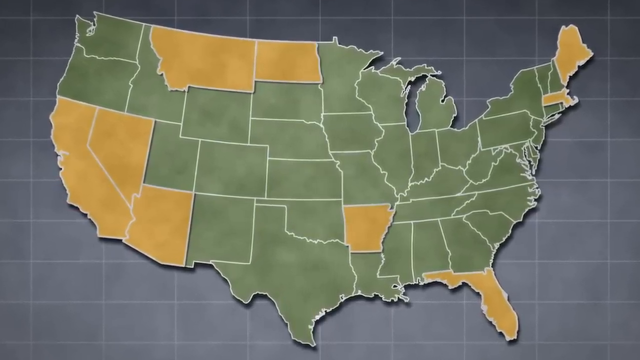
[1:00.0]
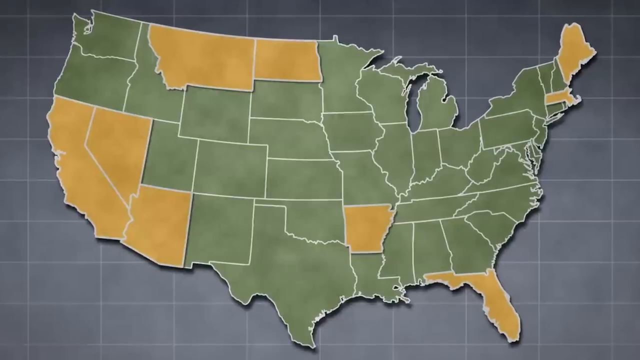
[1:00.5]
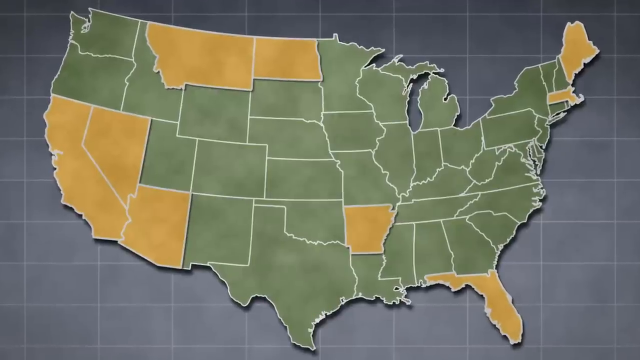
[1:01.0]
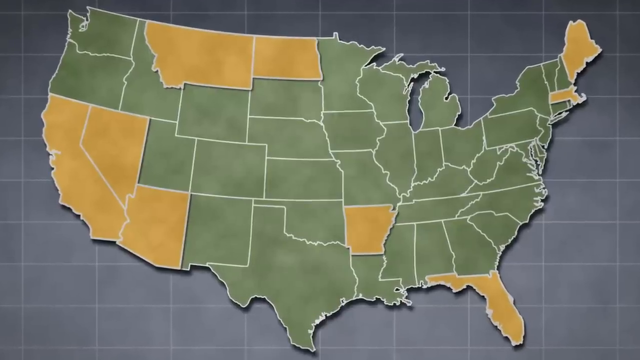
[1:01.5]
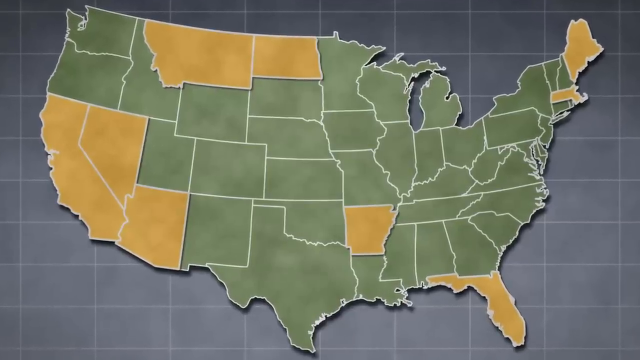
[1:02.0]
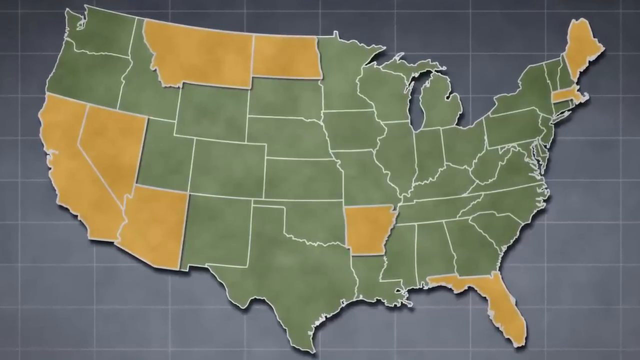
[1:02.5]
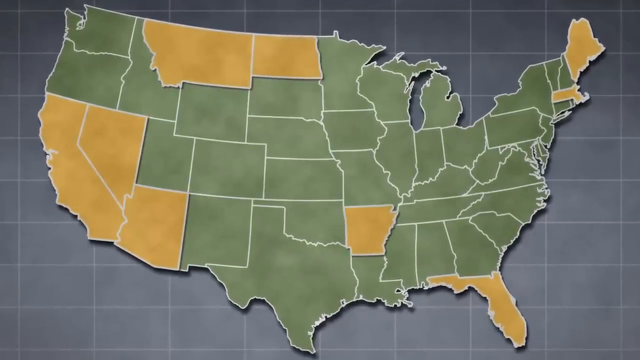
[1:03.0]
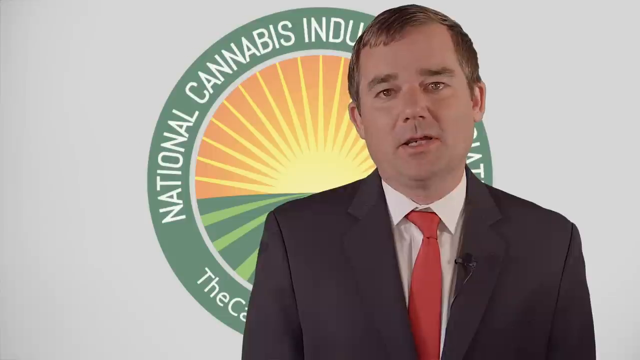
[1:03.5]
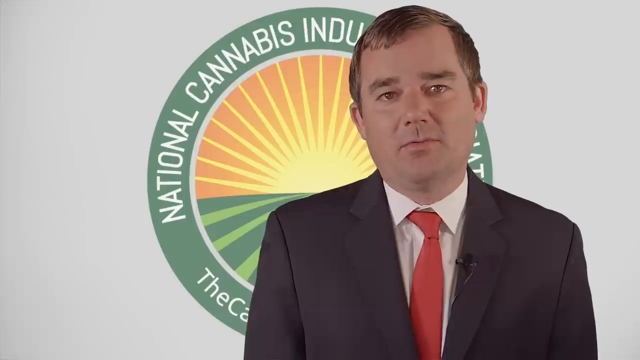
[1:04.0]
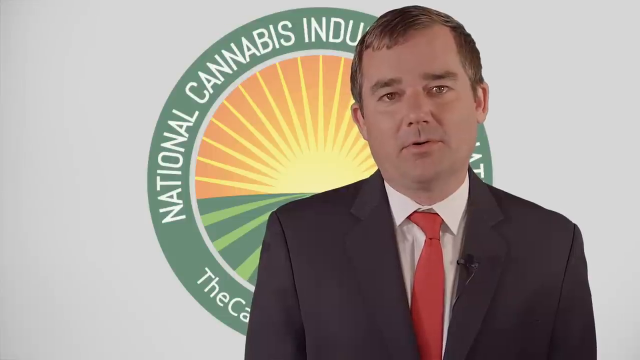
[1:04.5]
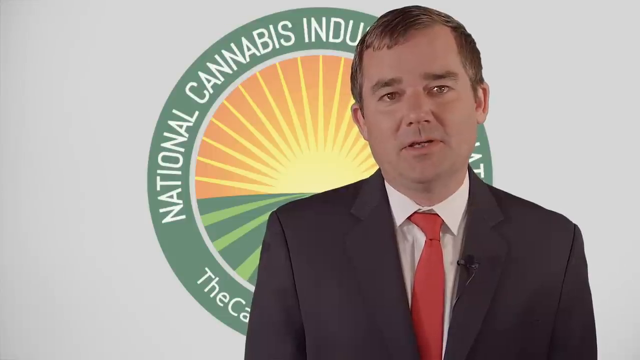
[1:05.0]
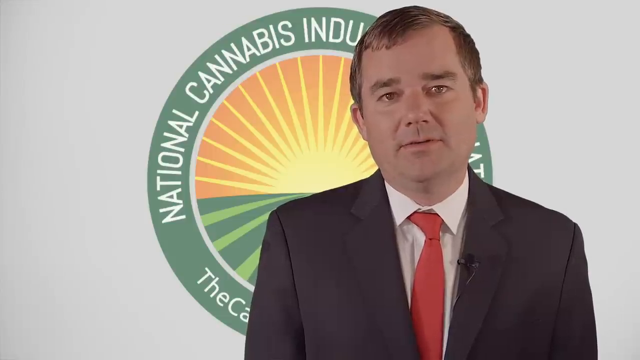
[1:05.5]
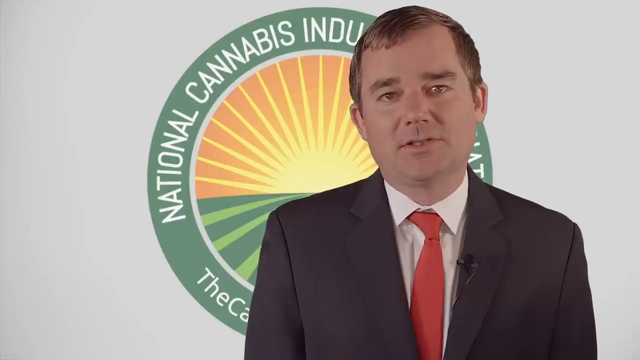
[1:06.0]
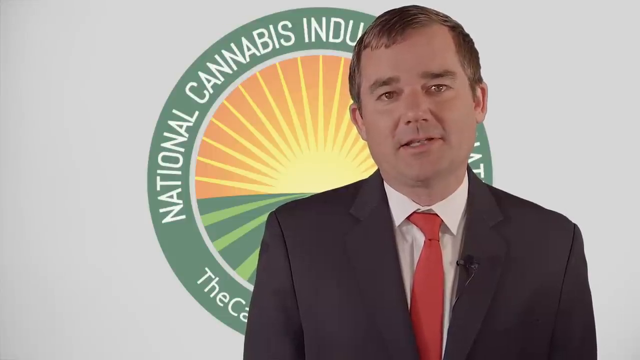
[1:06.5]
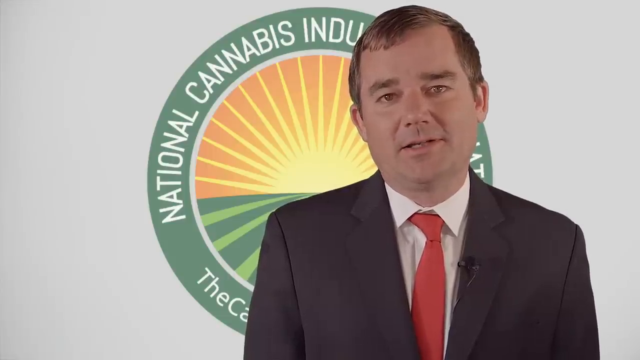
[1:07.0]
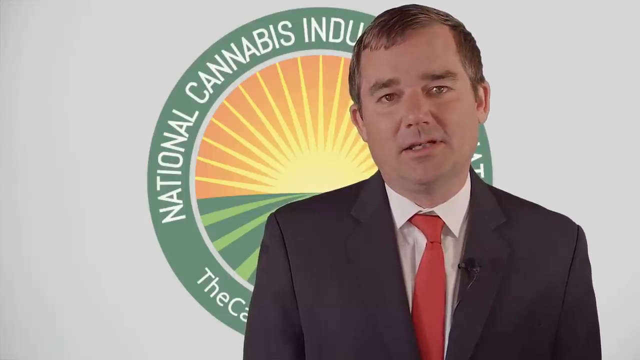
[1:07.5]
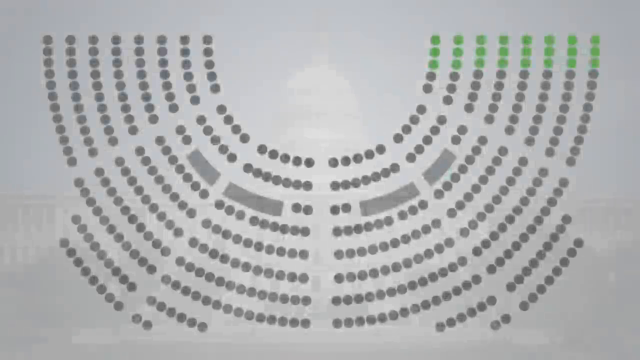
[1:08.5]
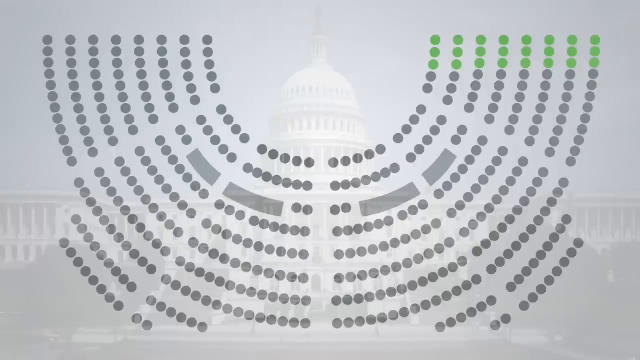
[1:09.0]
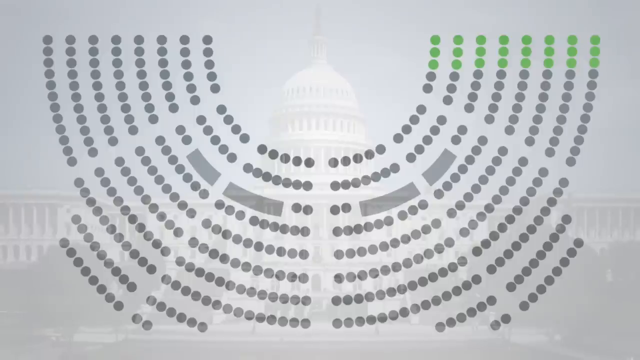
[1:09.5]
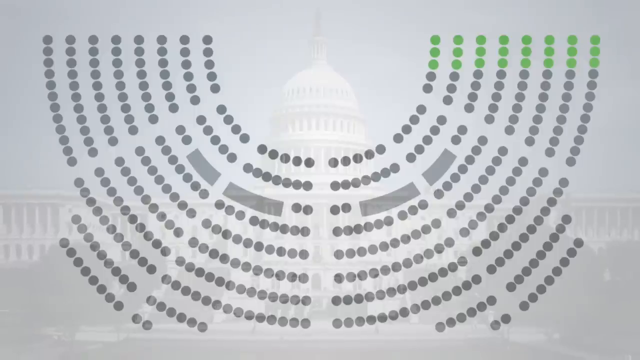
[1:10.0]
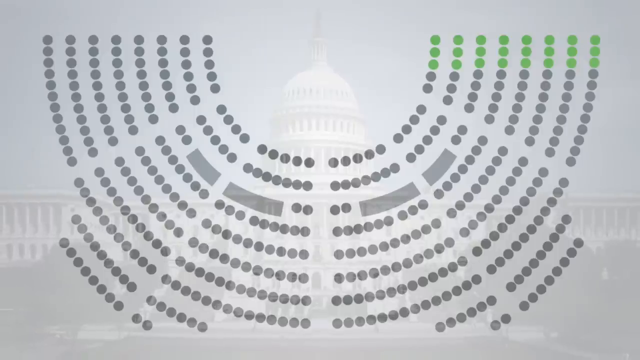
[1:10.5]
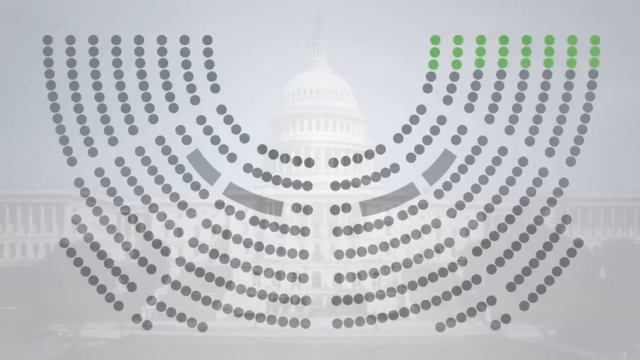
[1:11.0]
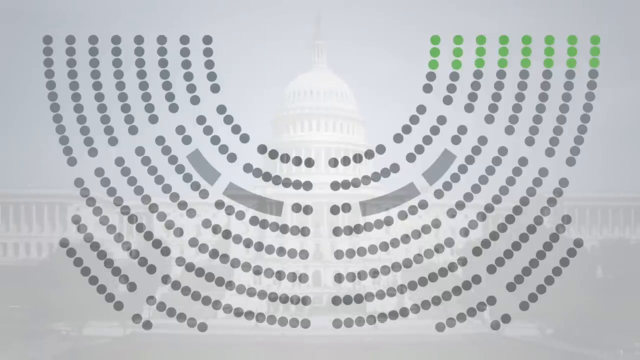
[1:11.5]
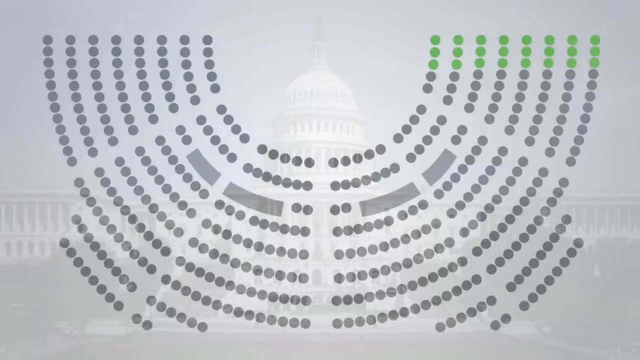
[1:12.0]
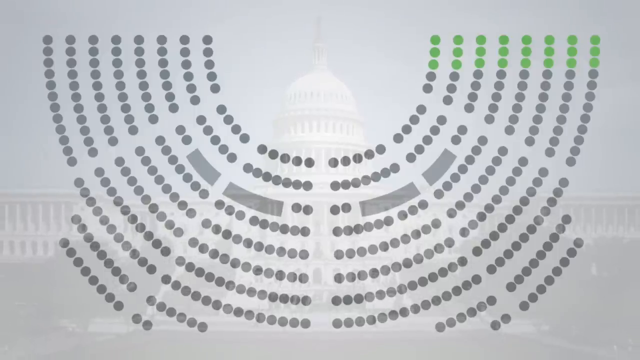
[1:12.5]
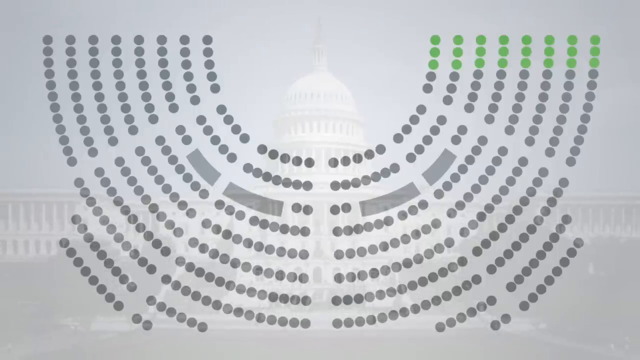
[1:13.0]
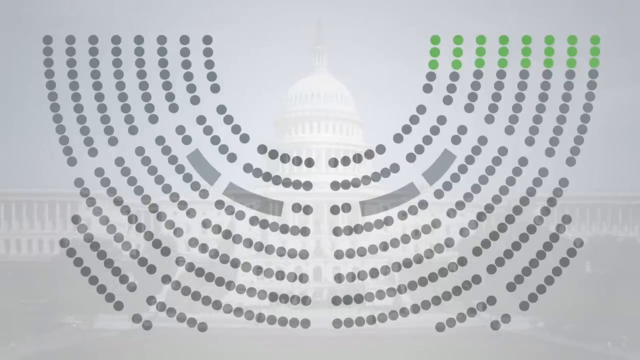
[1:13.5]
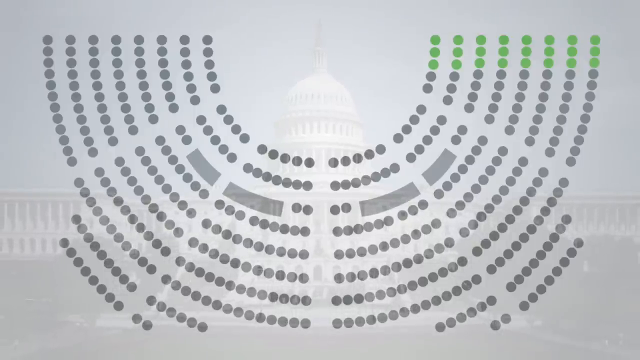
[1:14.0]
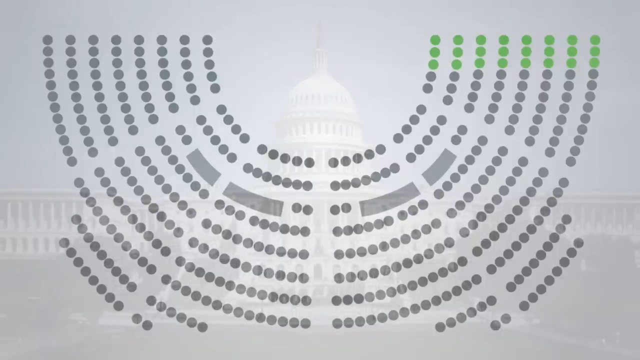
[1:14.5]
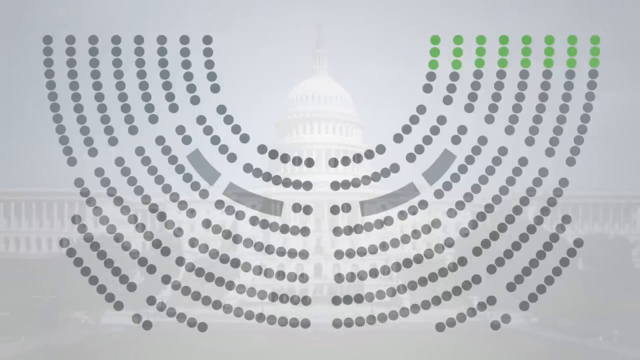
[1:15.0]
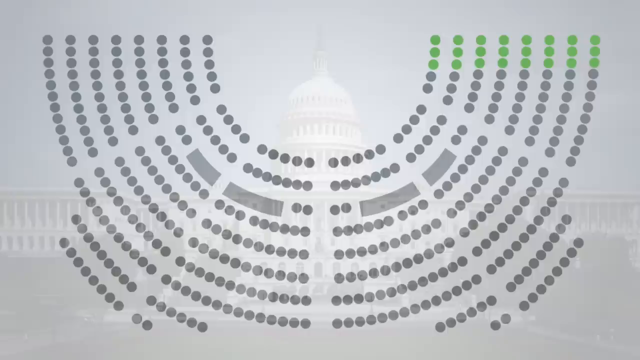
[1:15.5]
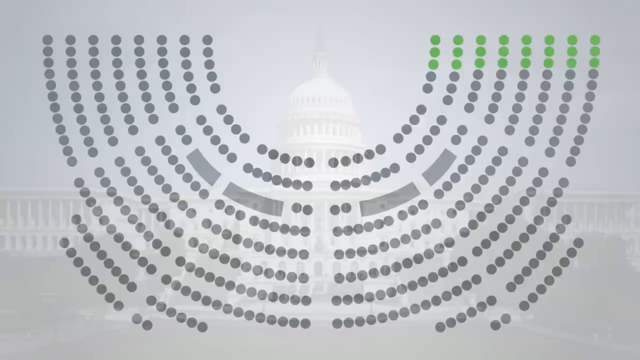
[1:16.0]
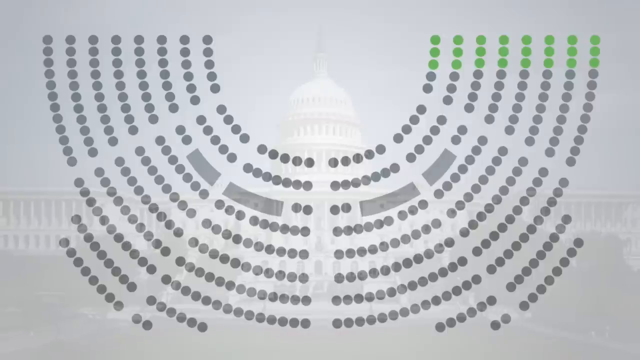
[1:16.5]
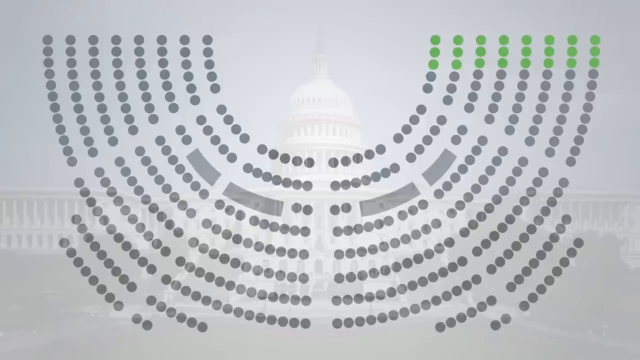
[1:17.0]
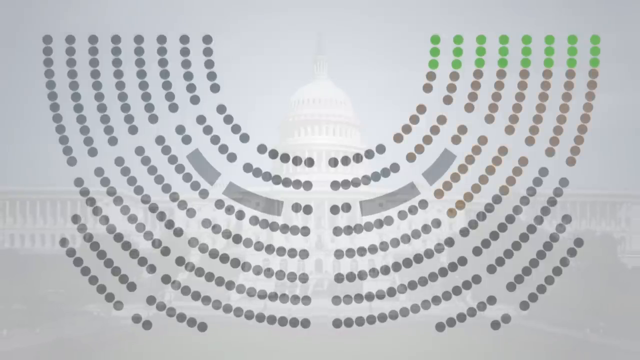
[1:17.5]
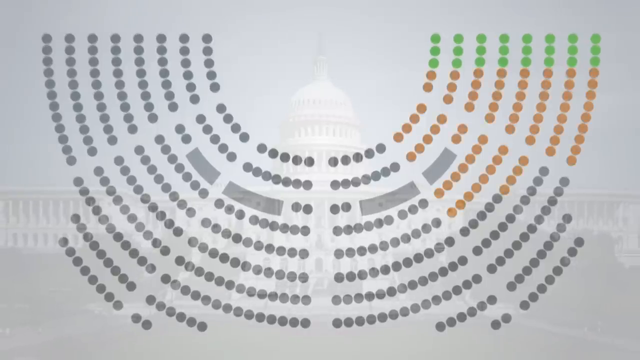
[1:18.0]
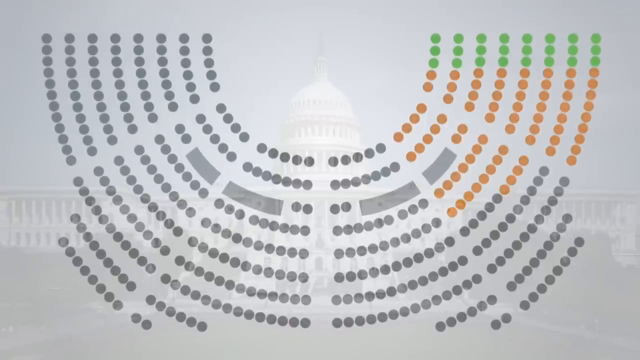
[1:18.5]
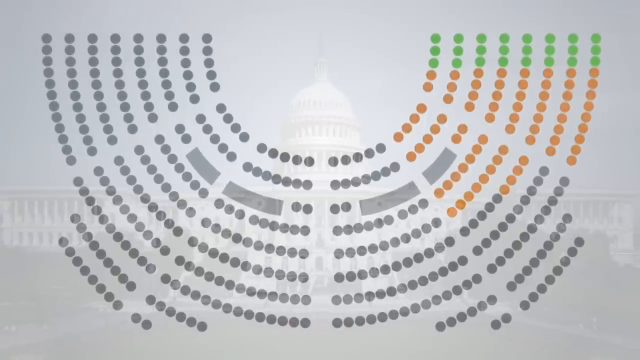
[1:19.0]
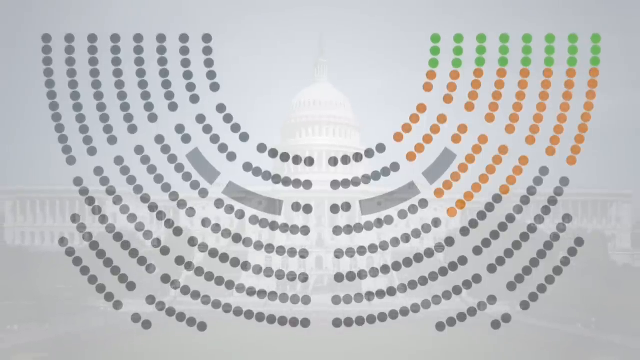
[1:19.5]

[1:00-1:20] The map is still shown, with a few states colored yellow and the rest green. The executive director of NCIA continues talking, still wearing the same suit with a white shirt and red tie; he has short hair. A representative sketch of how the seats appear in Congress follows: a diagram of Congress is in the background, and in the foreground there are dots that mimic the seating positions of the members of Congress. Most of the dots are gray, but a few are green. Then a few of the dots adjacent to the green ones turn orange. This possibly represents the section of the members of Congress who support cannabis use.